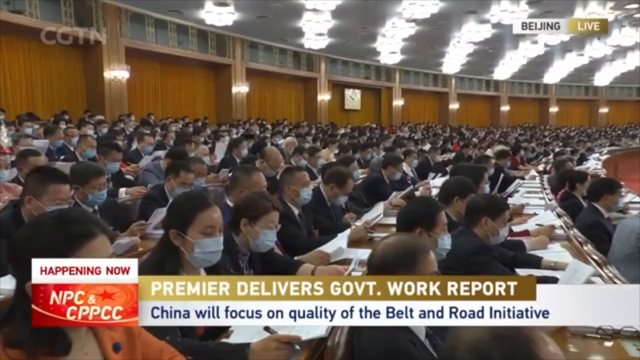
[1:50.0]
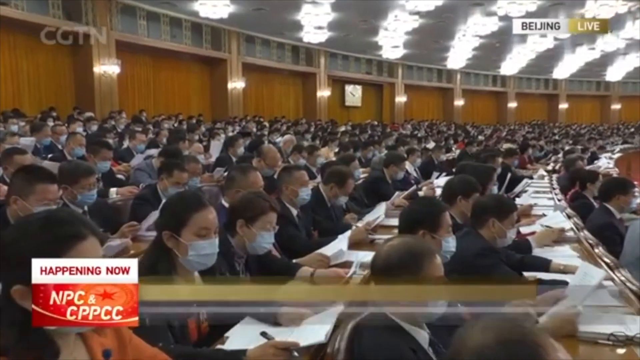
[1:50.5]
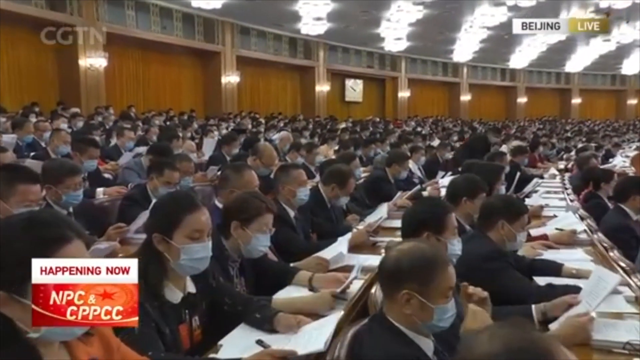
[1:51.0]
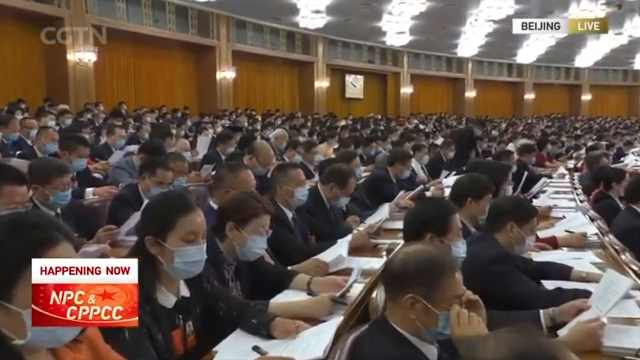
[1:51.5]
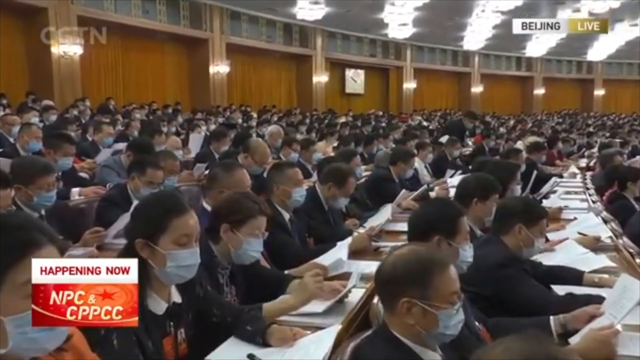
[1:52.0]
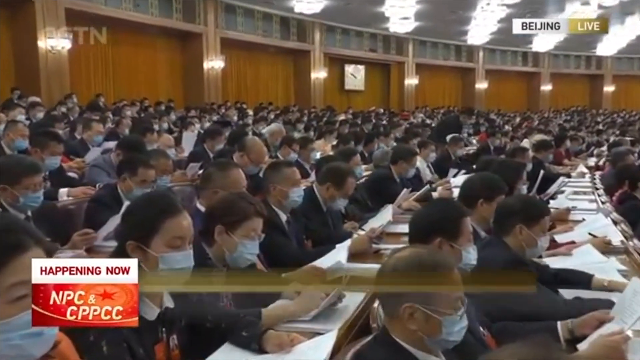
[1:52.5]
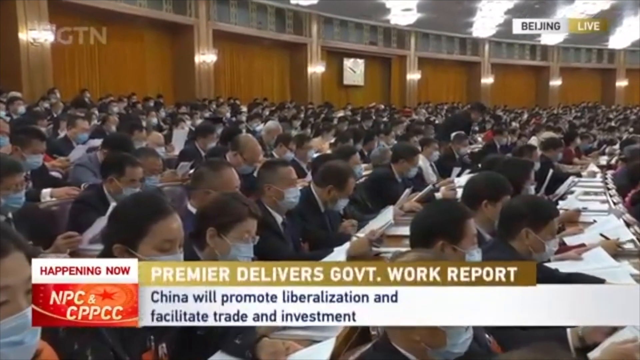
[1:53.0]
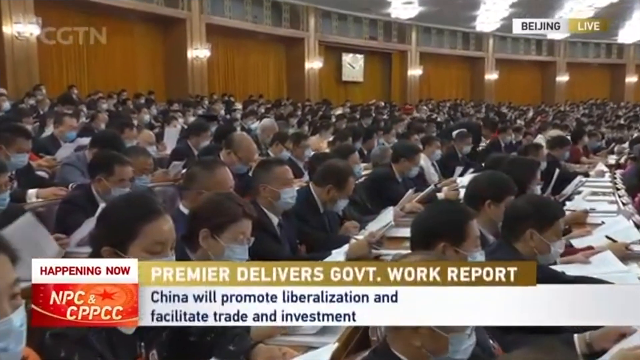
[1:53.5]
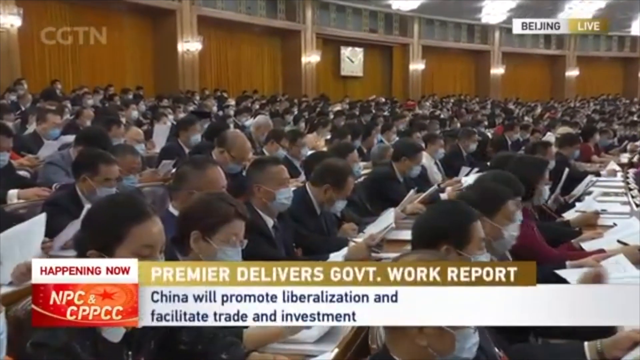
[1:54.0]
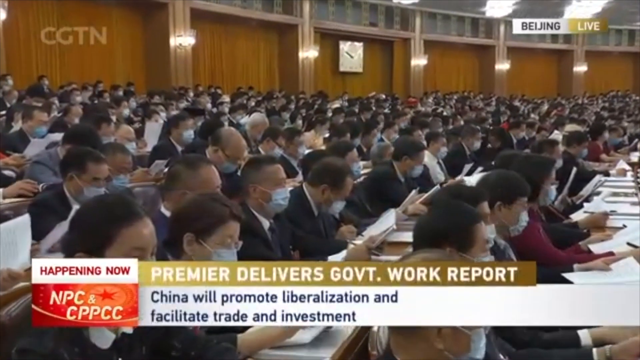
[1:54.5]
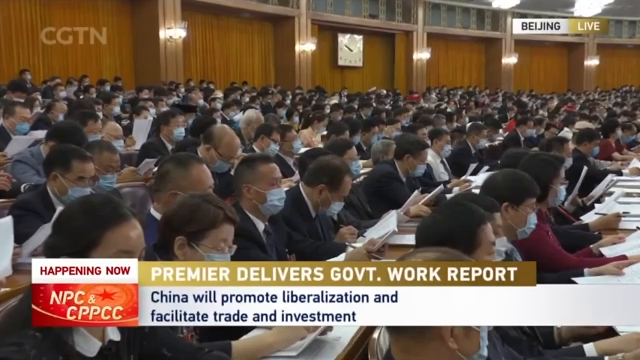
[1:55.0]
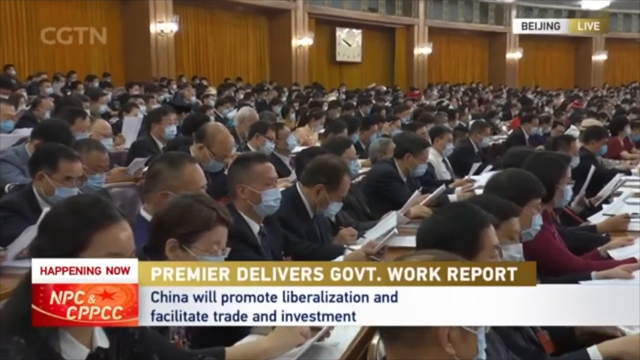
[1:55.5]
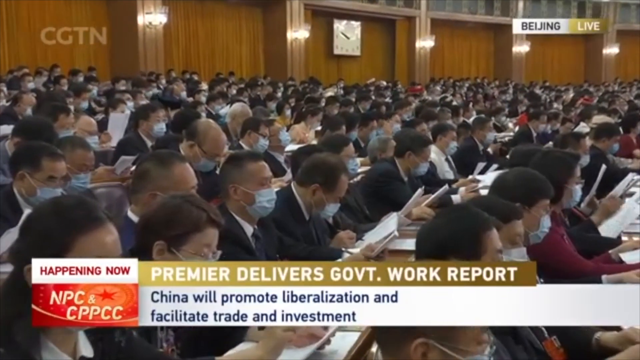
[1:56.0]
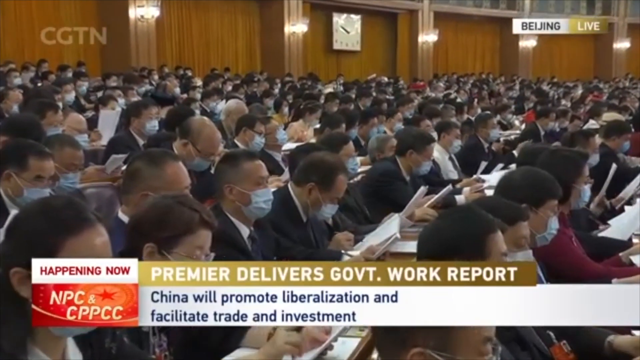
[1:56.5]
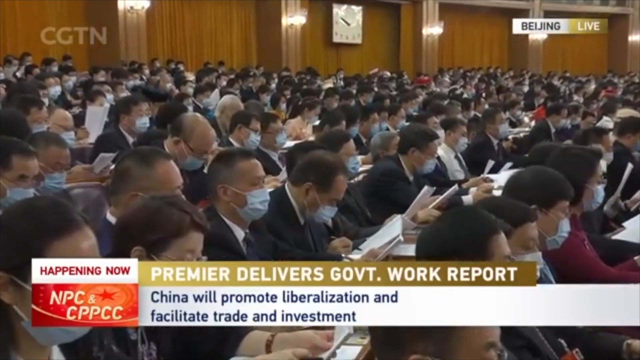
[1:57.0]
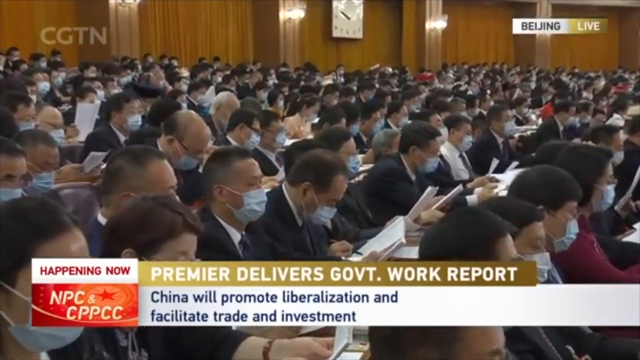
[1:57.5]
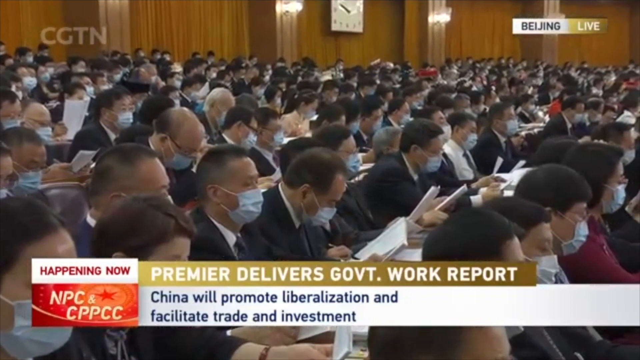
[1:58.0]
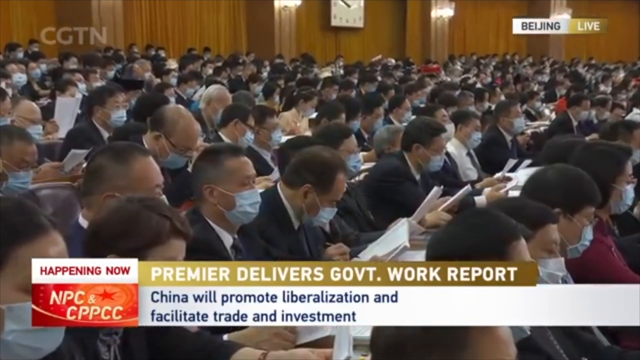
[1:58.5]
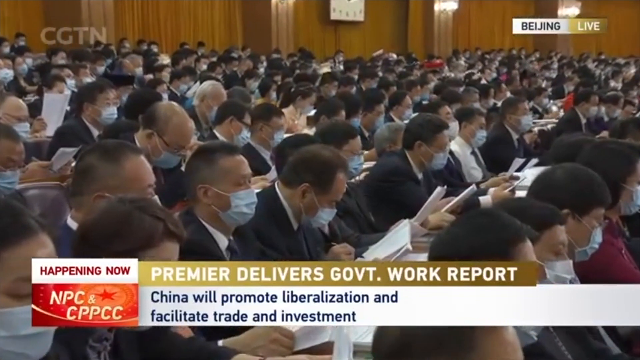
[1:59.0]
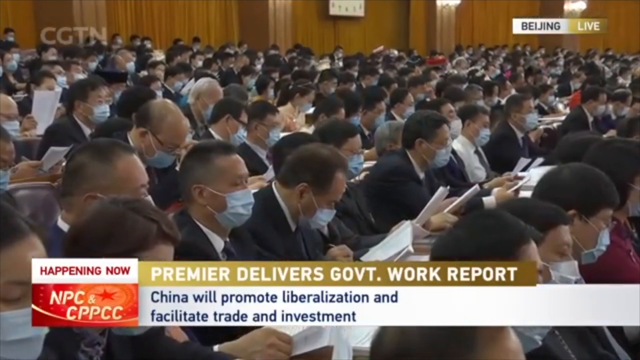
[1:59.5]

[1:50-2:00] The audience is still intently looking at their pieces of paper. The camera seems to zoom in toward the center of the audience, showing people looking at the report and writing notes on it. The lower third changes to "China will promote liberalization and facilitate trade and investment", just below the "Premier delivers government work report" title. The live from Beijing text remains in the top right and the CGTN logo in the top left, and the "Happening now" graphic with NPC and CPPCC is still at the bottom.